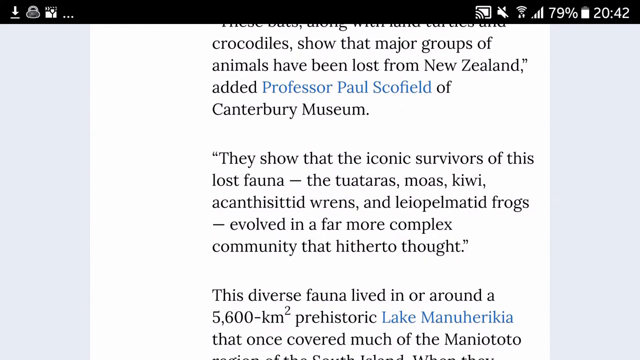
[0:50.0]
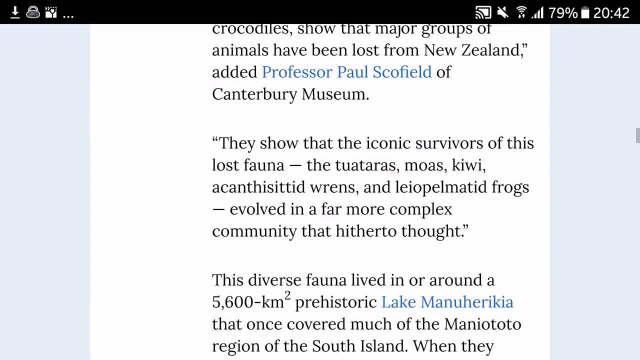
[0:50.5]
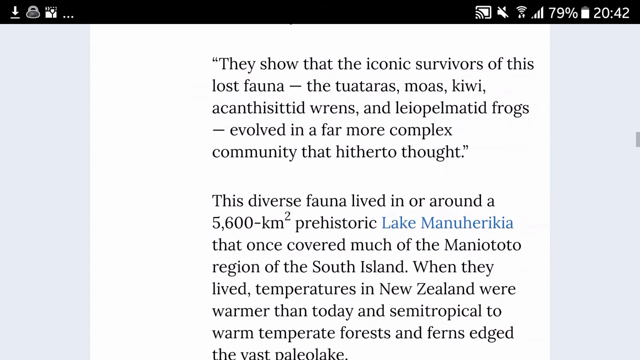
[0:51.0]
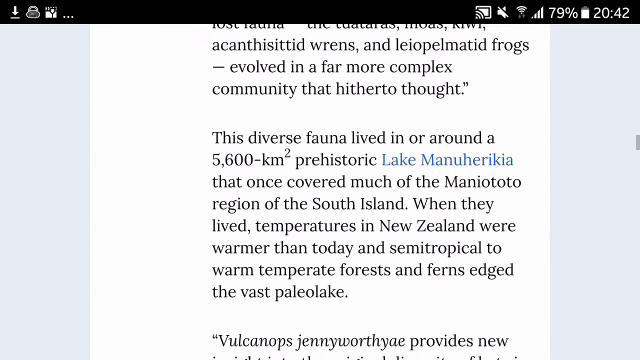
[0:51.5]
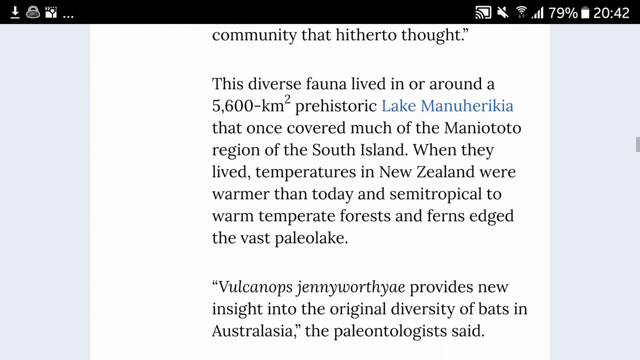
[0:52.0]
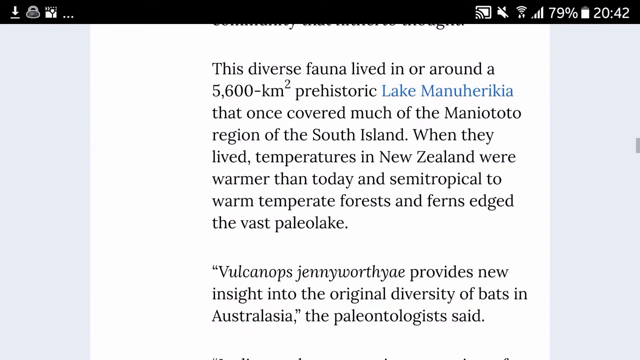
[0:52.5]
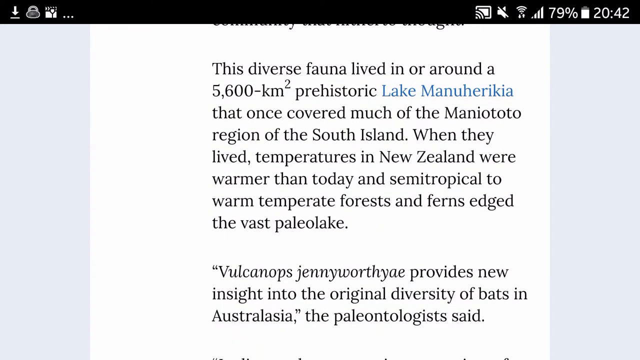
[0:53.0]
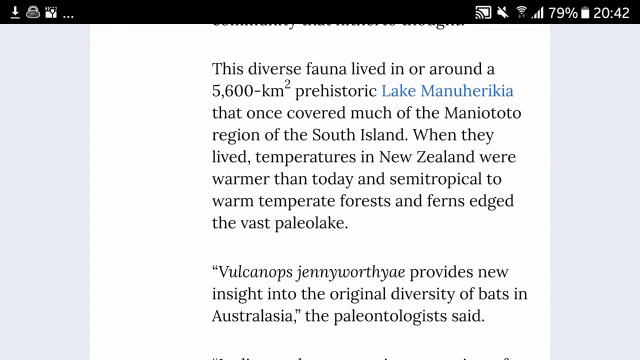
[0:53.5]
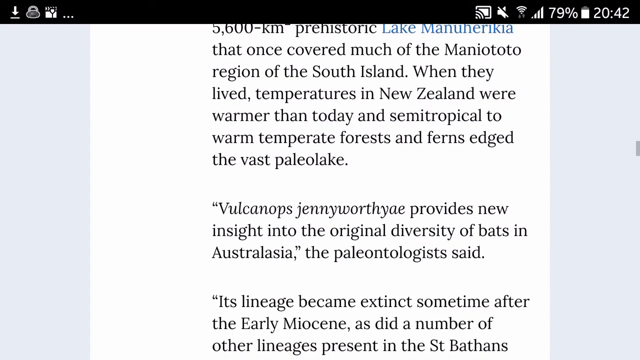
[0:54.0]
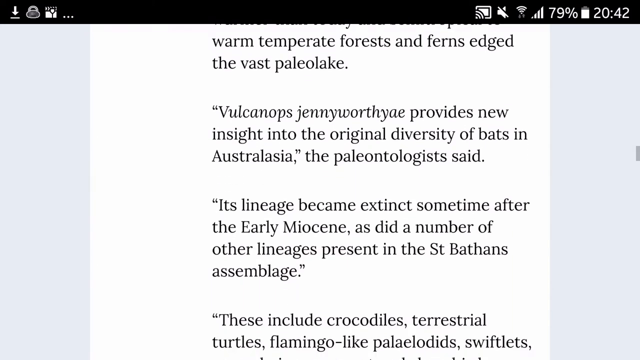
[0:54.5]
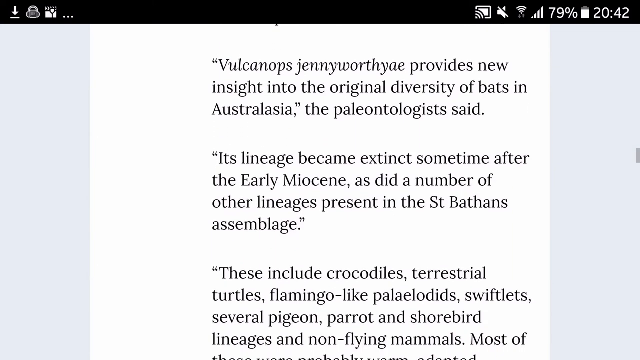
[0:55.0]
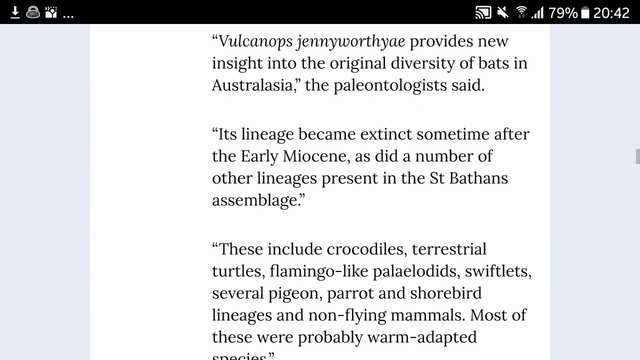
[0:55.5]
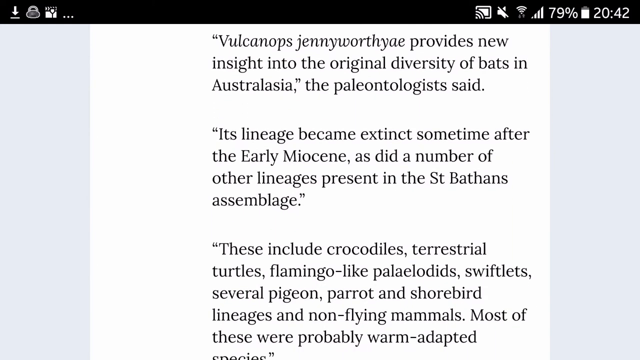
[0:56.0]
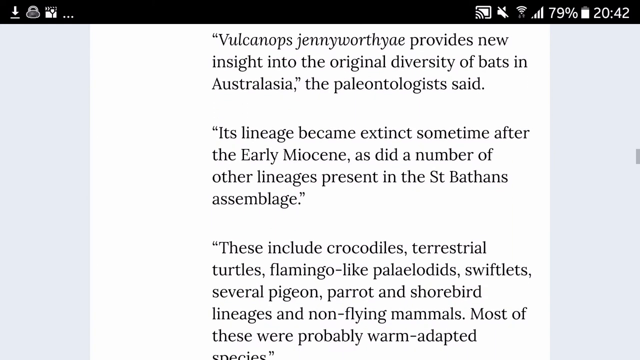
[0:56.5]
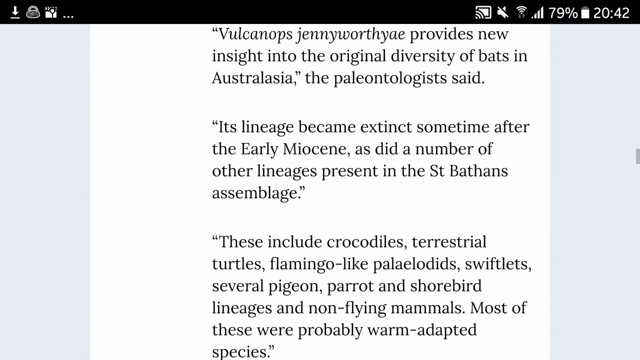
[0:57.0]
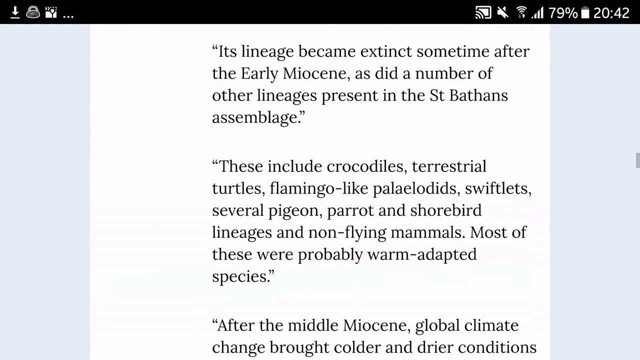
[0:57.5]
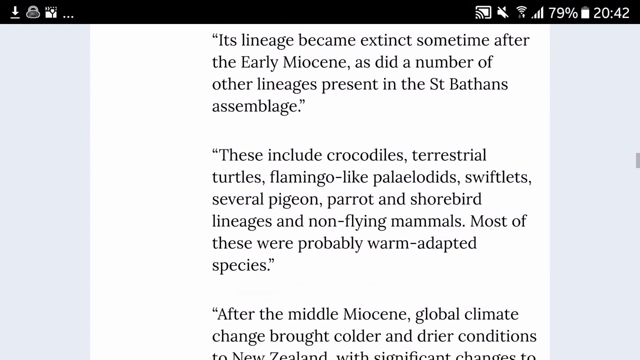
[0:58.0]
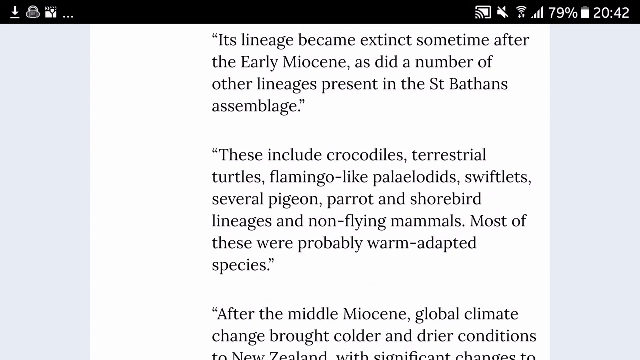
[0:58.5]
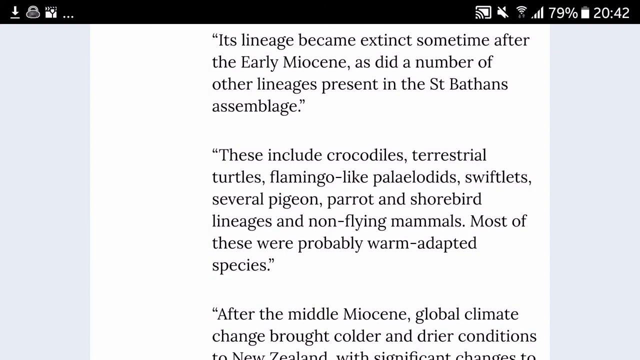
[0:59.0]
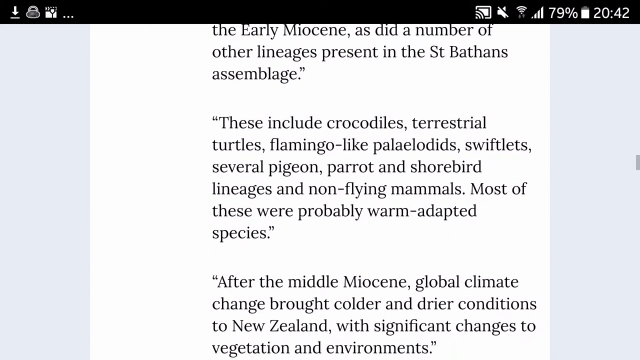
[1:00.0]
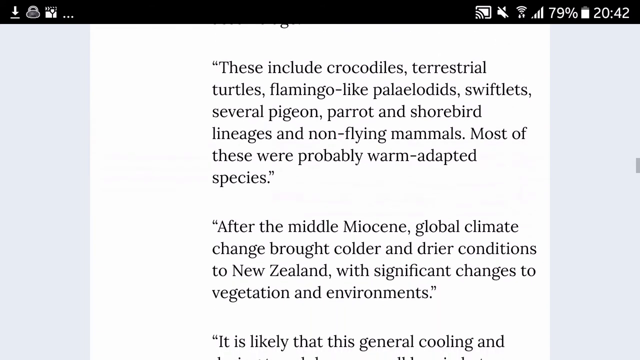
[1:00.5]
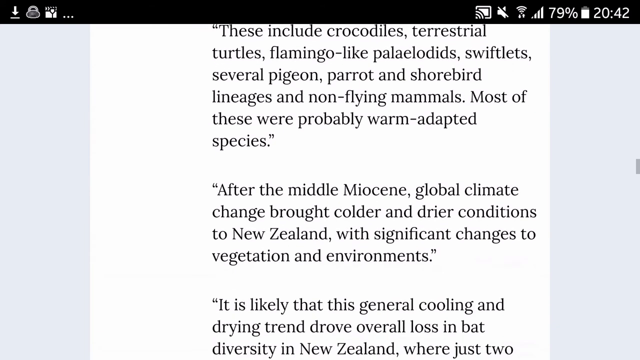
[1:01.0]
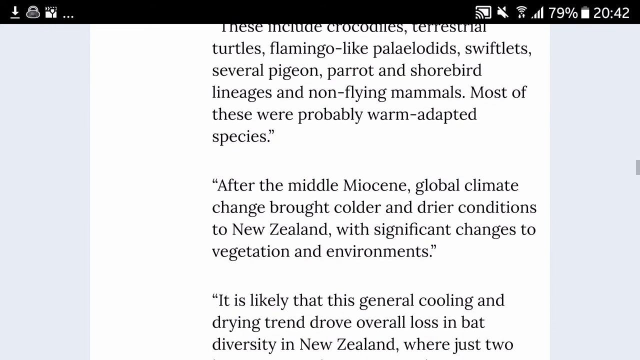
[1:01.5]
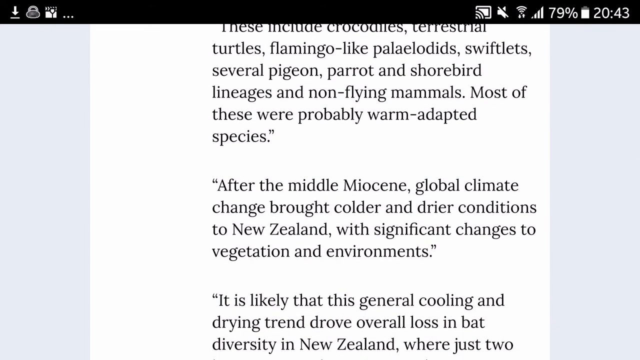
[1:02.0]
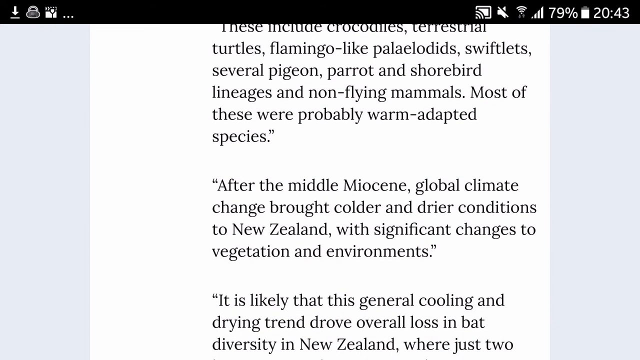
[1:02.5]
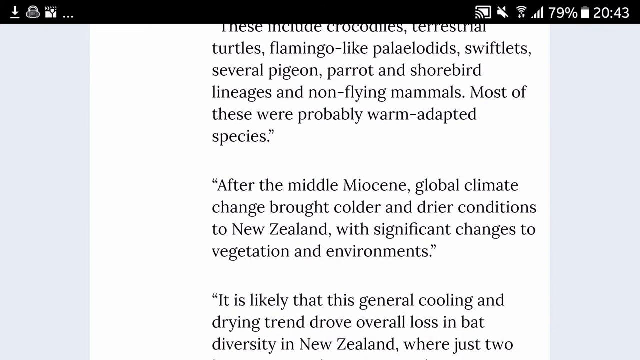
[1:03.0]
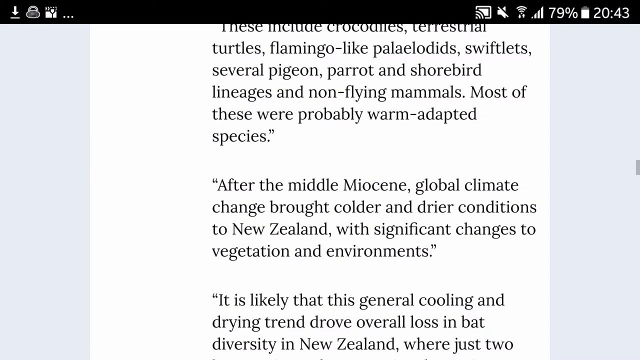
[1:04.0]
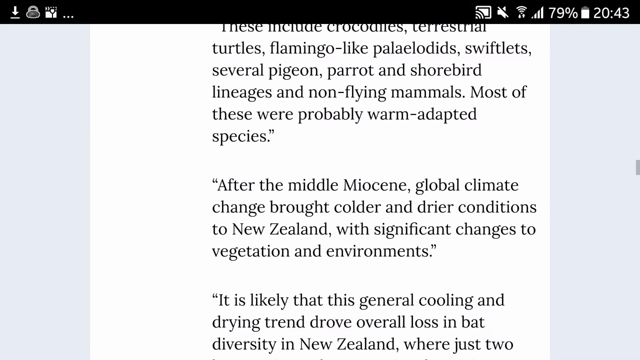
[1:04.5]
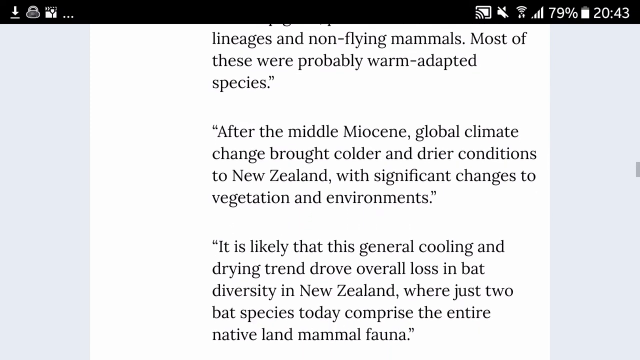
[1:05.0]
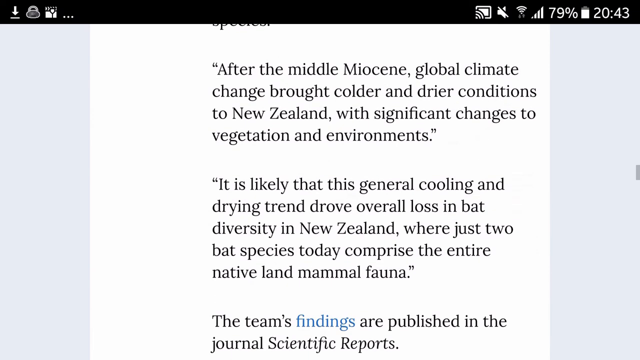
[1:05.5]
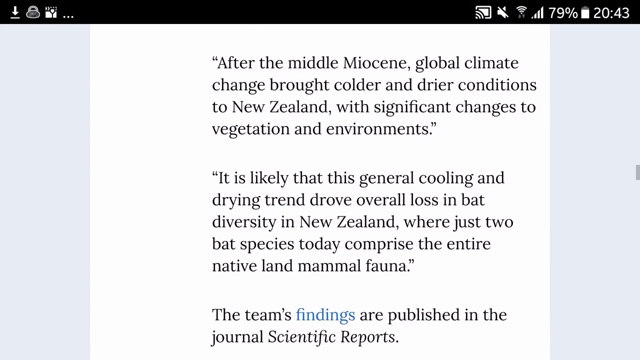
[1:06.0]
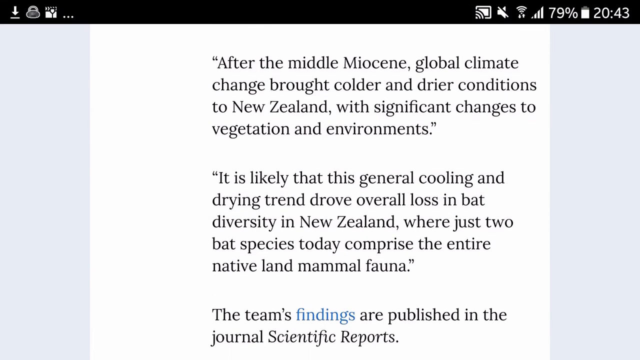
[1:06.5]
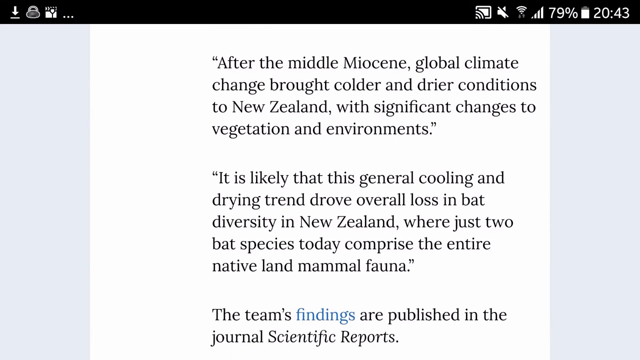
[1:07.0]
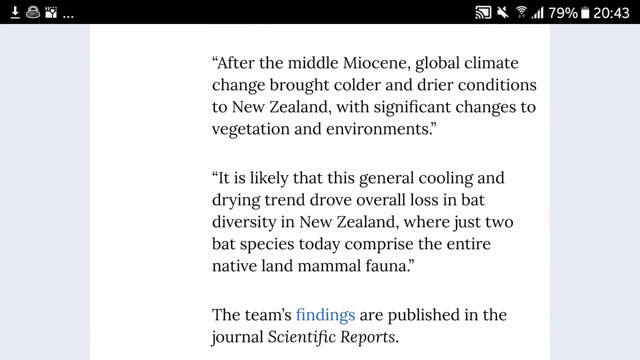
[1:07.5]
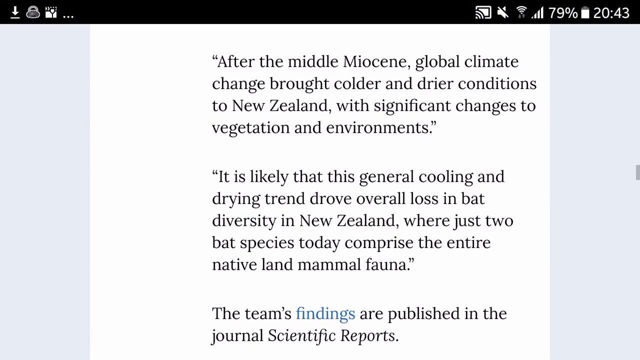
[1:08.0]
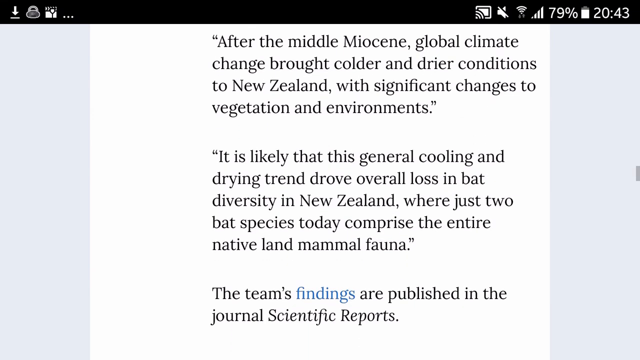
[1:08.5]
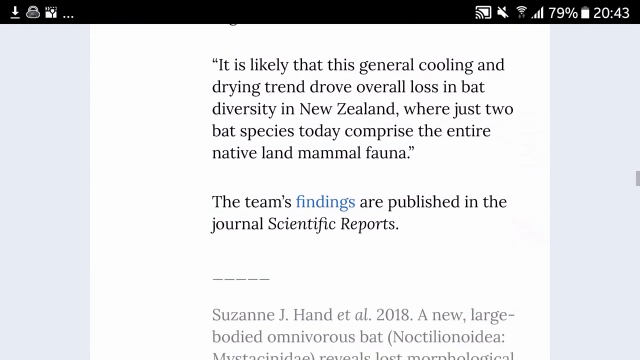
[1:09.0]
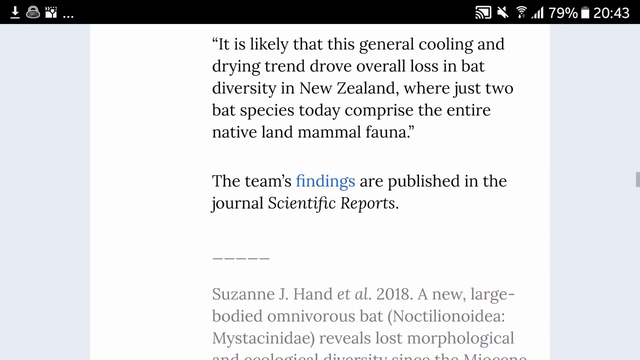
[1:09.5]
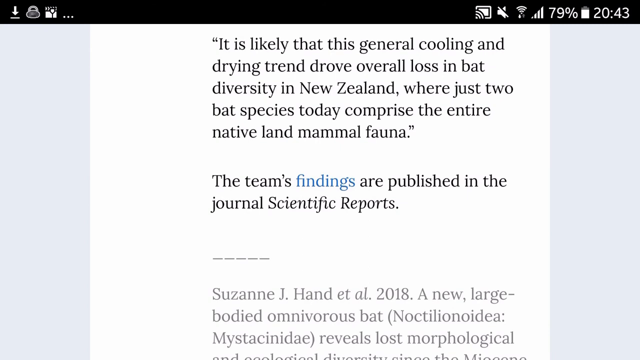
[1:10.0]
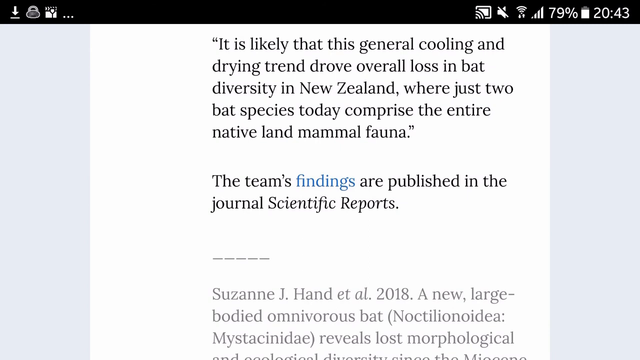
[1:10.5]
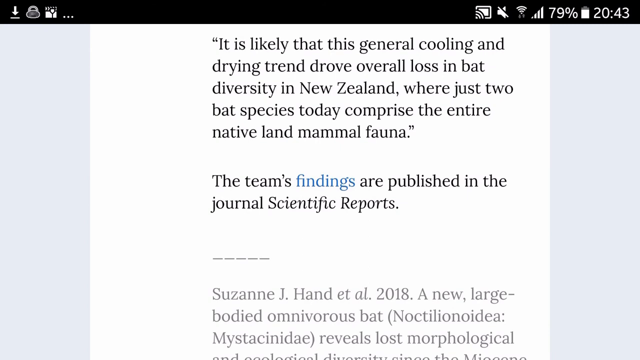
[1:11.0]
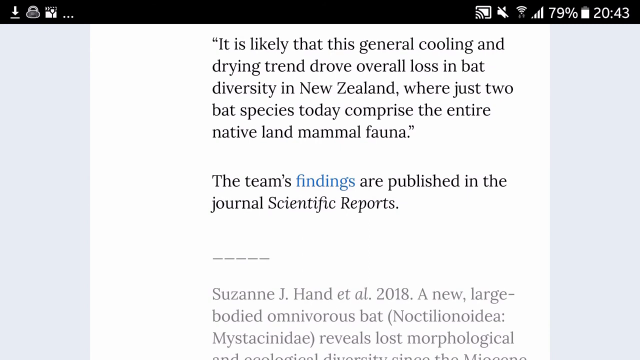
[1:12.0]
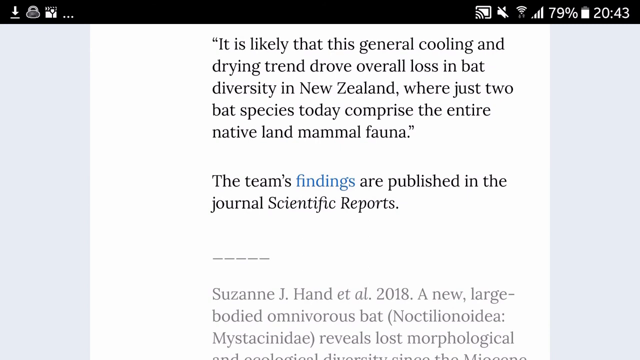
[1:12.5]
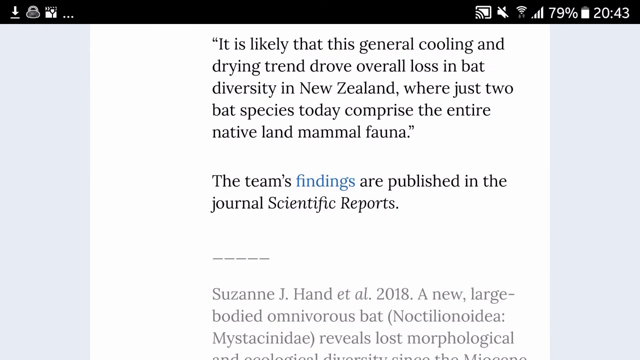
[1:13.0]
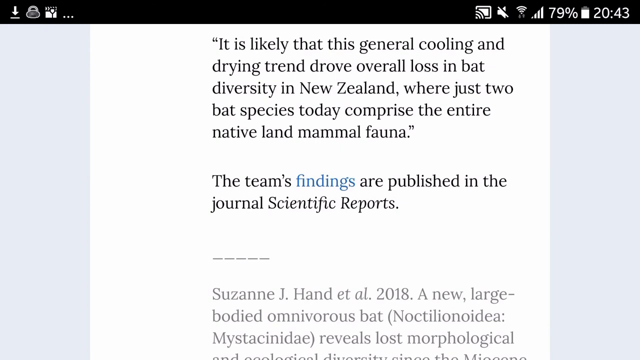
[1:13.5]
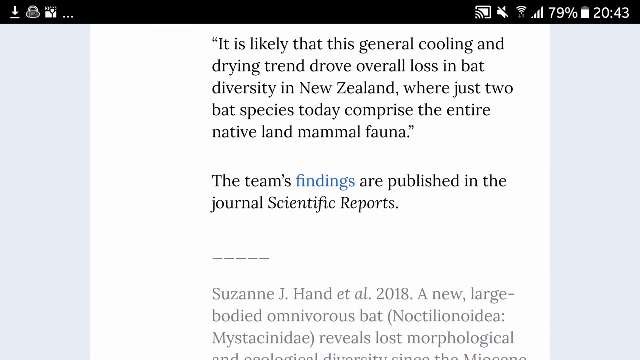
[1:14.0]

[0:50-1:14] The close-up of the screen continues as the page scrolls down; the computer monitor itself is not visible, and no people appear. The text says the iconic survivors evolved in a far more complex community than originally thought. Scrolling on, it lists animals including crocodiles, terrestrial turtles, flamingo-like animals, swiftlets, several penguins, parrot and shorebird lineages, and non-flying mammals, stating that most of these were probably warm adapted species. It goes on to say that global climate change brought colder and drier conditions to New Zealand, with significant changes to vegetation and environments.